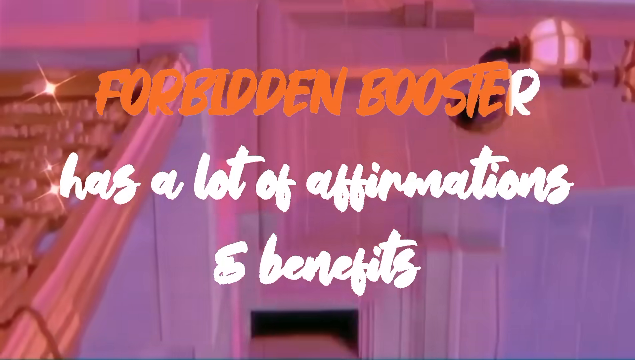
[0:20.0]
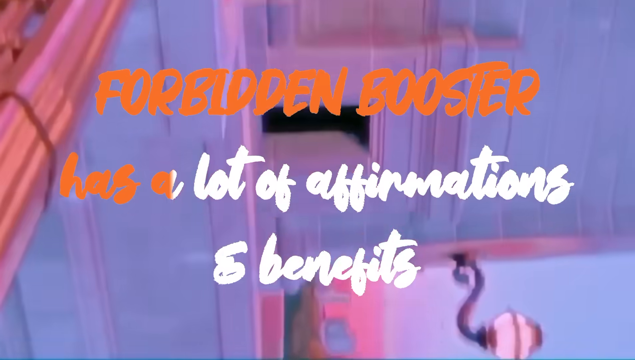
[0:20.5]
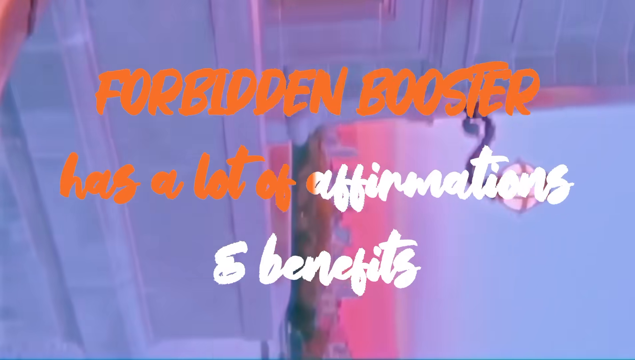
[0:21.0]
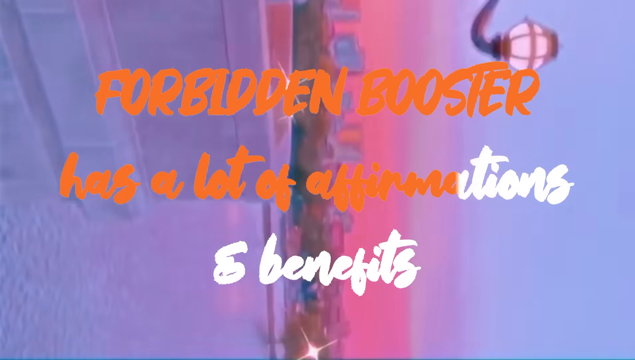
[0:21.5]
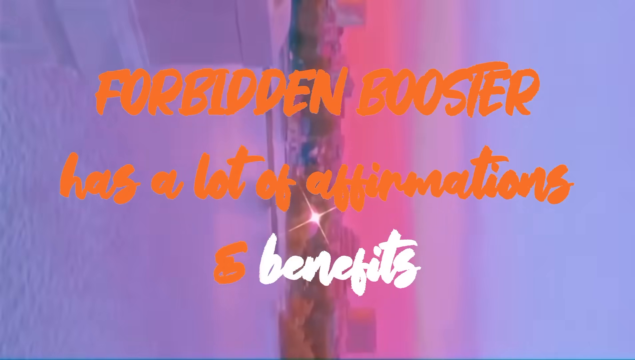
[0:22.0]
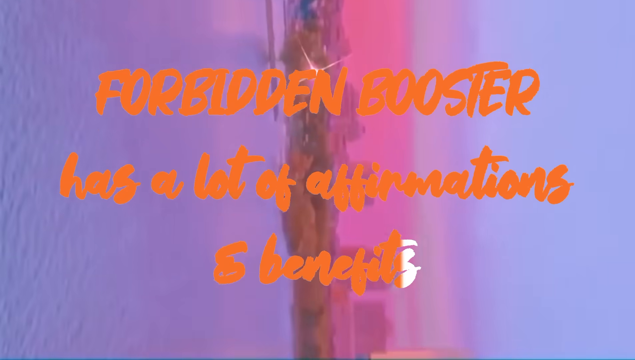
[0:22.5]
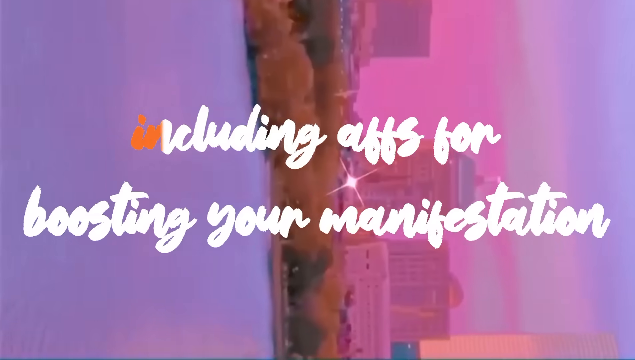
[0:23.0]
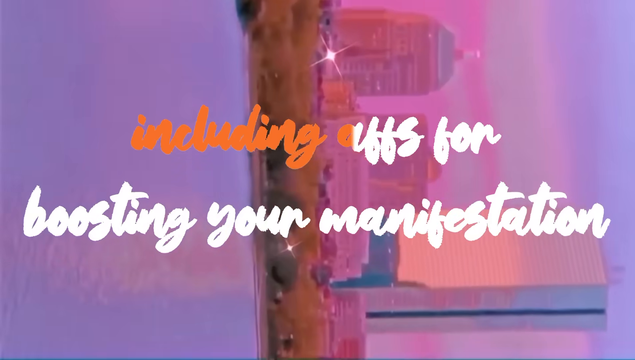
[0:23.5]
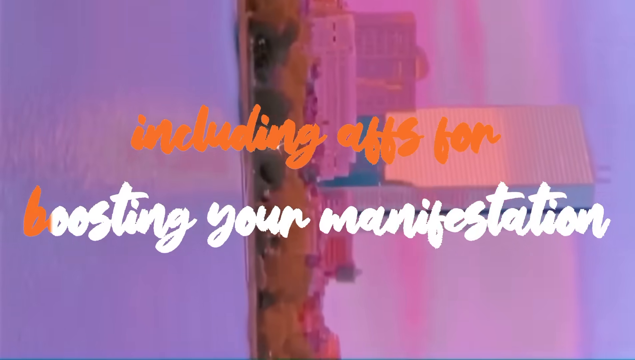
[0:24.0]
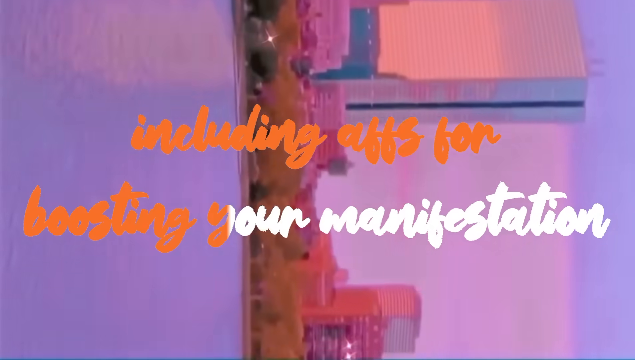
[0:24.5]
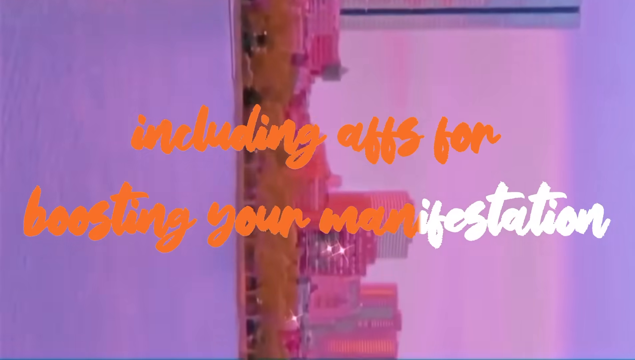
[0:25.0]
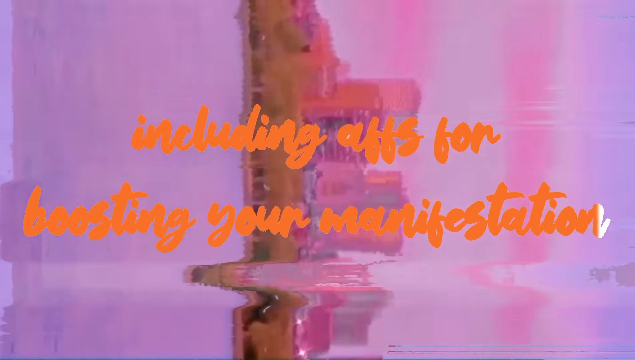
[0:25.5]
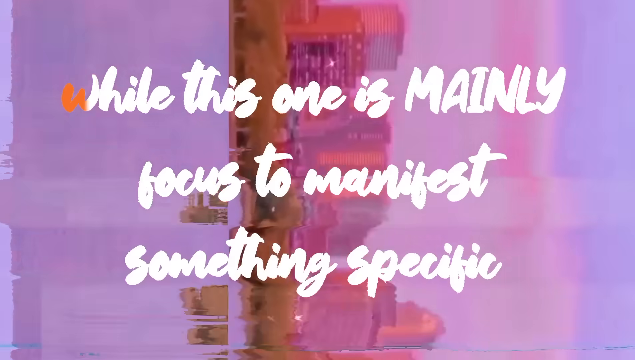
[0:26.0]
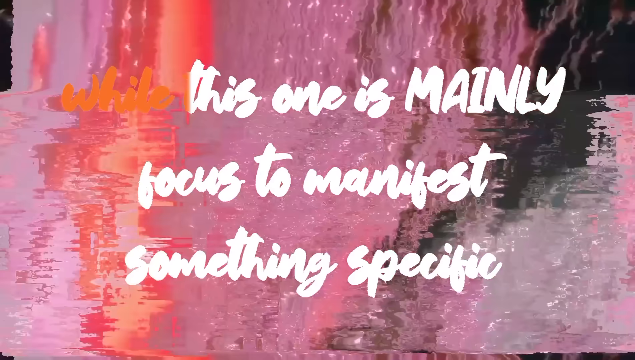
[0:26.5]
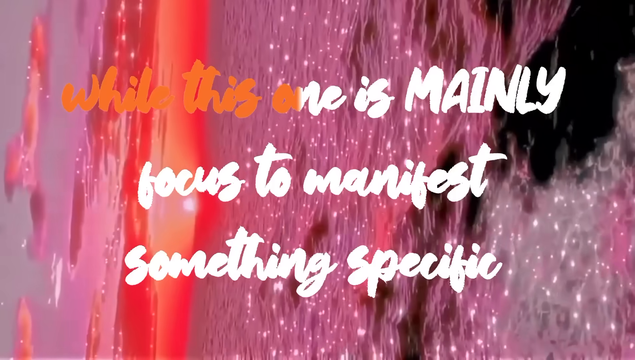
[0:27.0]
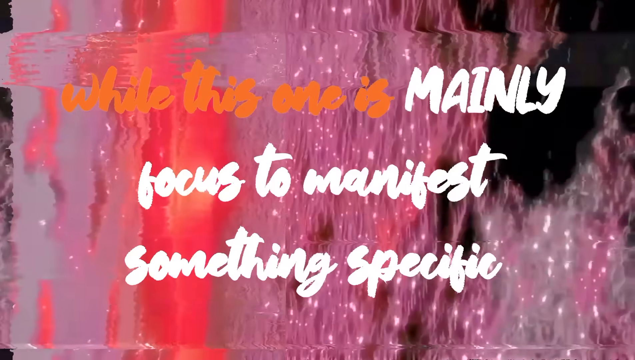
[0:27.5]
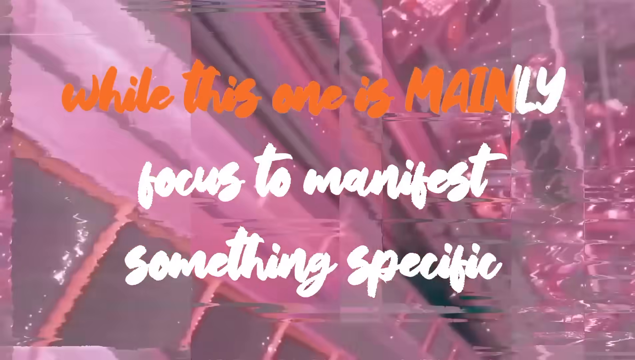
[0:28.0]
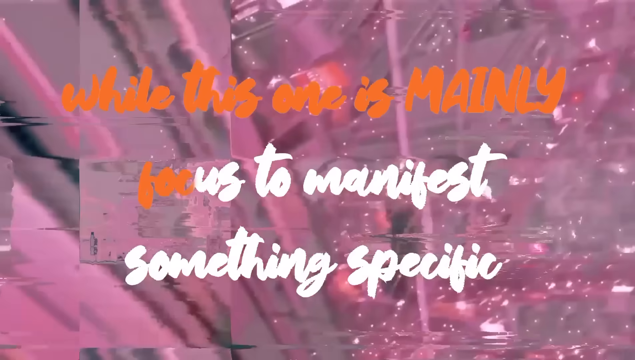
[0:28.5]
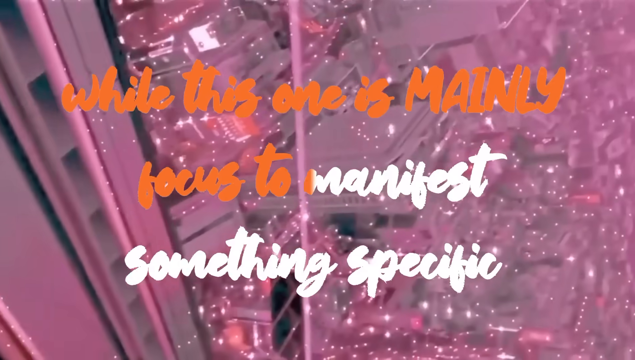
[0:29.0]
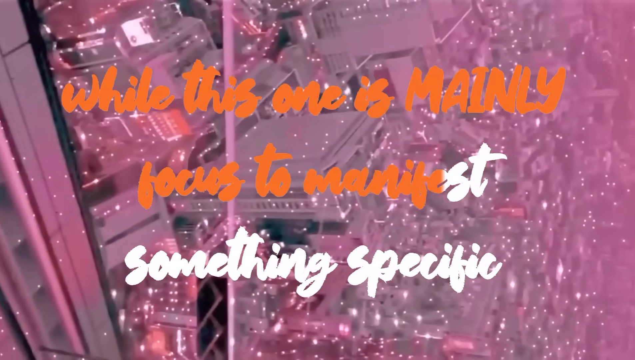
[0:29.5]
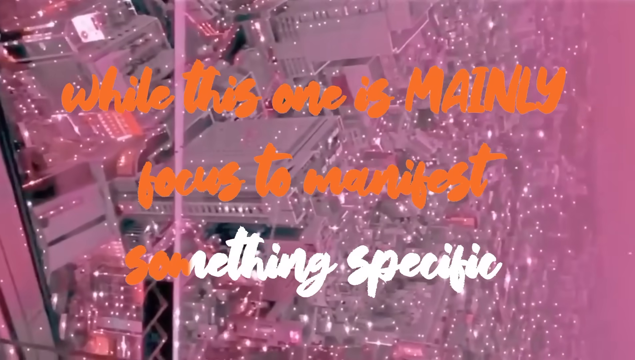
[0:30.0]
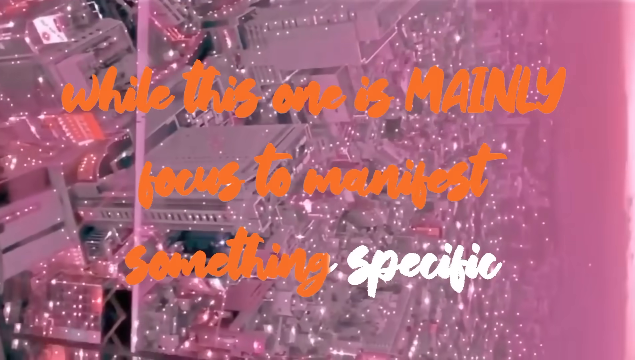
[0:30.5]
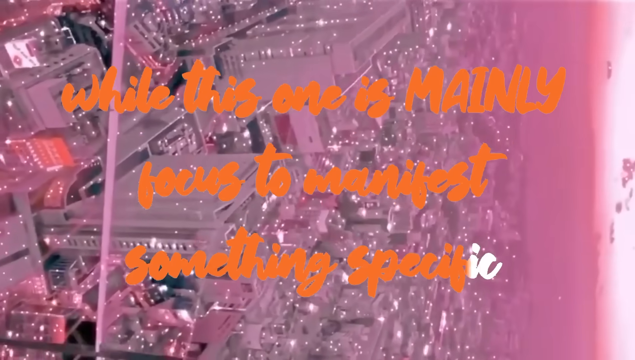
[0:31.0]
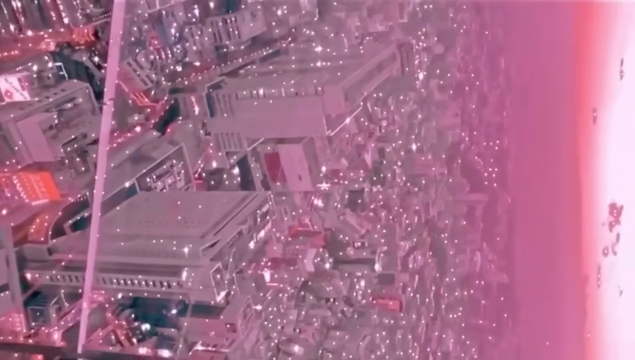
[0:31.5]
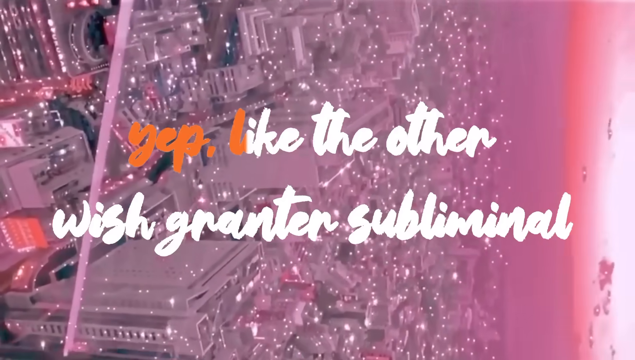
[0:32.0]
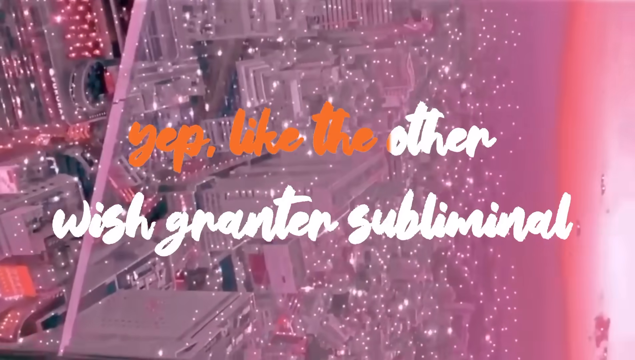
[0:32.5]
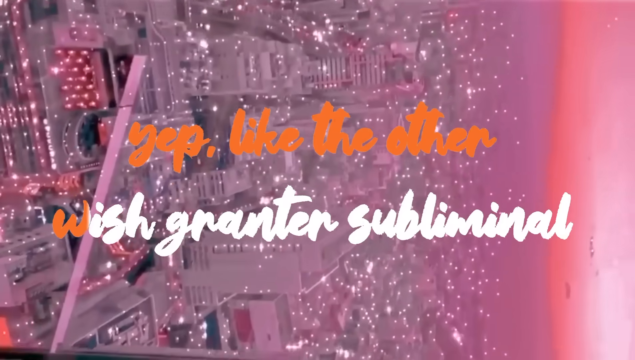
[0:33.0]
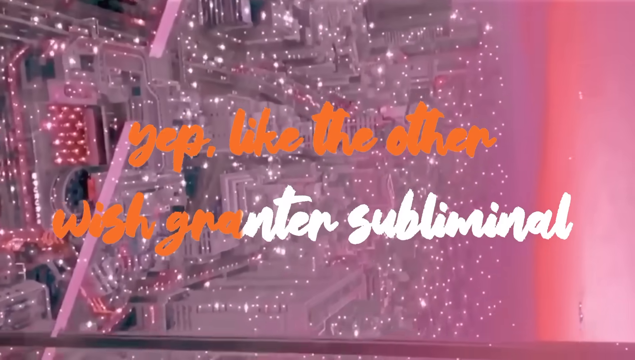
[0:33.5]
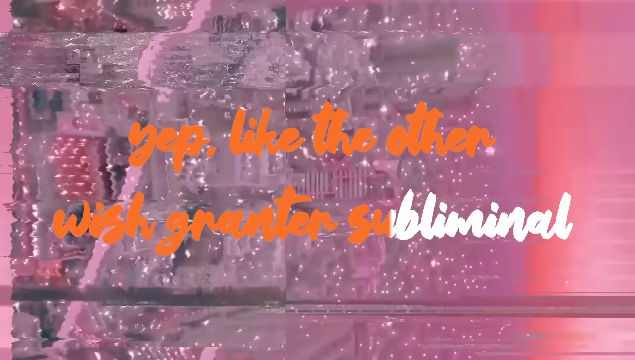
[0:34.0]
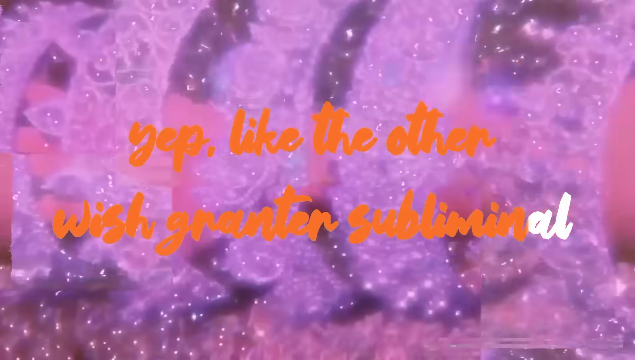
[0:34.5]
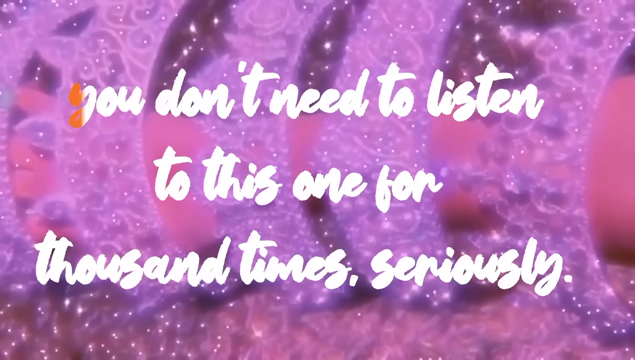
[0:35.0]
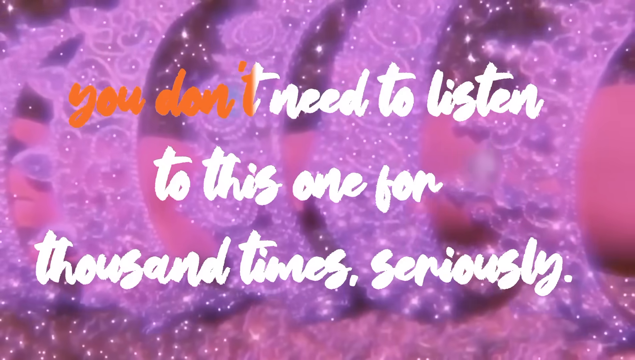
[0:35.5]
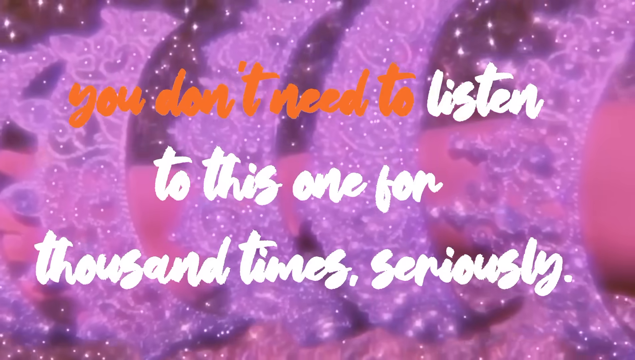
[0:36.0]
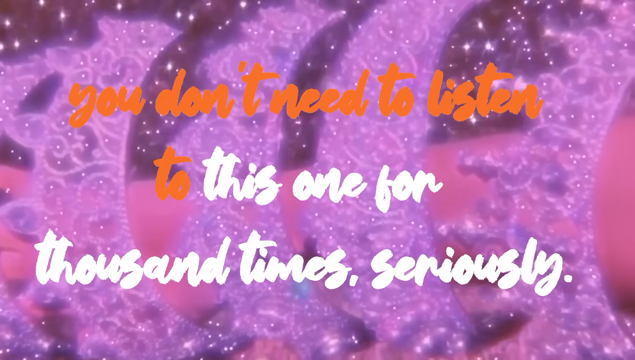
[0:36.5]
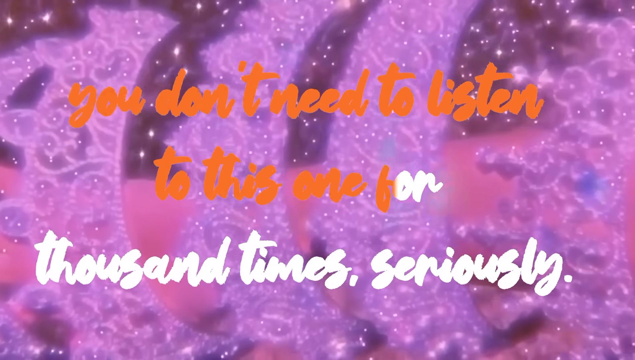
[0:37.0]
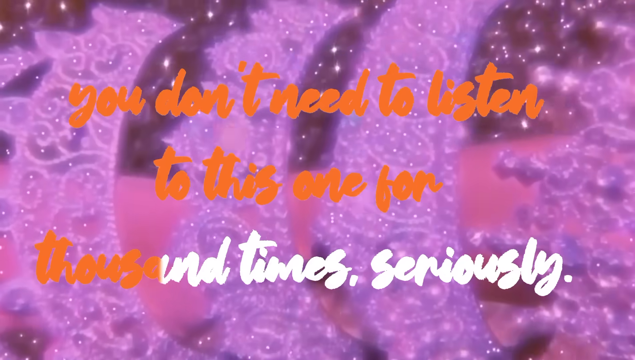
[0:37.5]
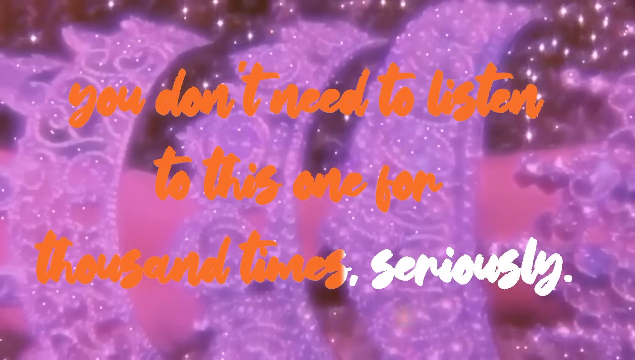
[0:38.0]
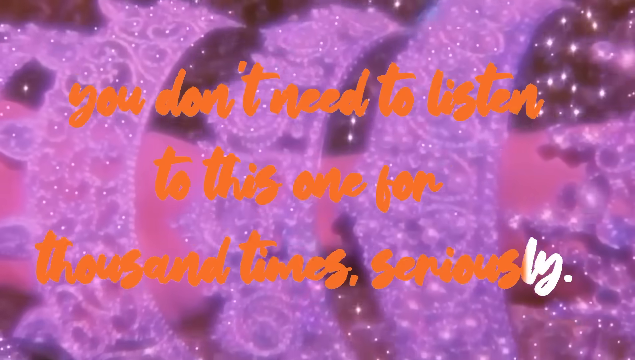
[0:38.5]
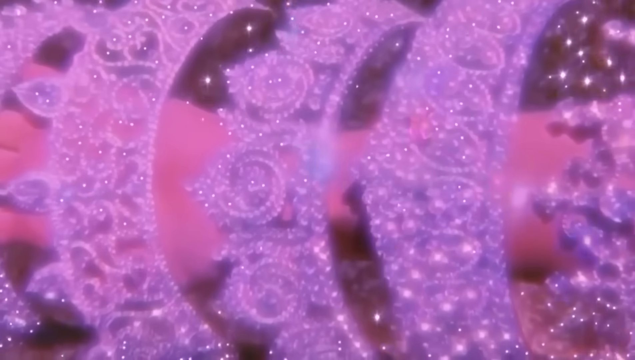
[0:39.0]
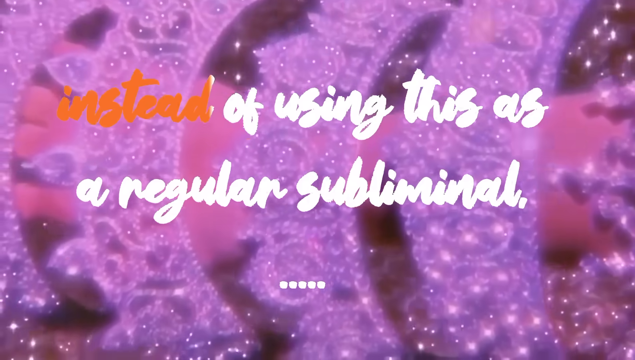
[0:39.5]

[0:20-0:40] The Falling Star, I want it, I get it video continues as a kind of artsy piece. Text says "forbidden booster has a lot of affirmations and benefits" over a scene of what is apparently the city of Las Vegas in the background, in a very artsy, weird, sped-up presentation. Further text says "this one is mainly focused to manifest something specific." The video then shows sparkly, weird background footage with sideways scenes and very strange glittery scenes. Many of the words are misspelled. "moza money" appears in the bottom right corner.